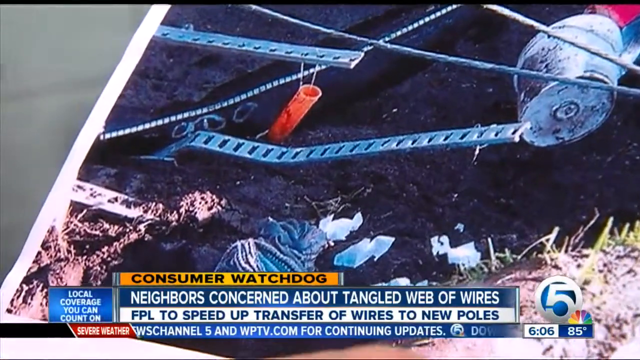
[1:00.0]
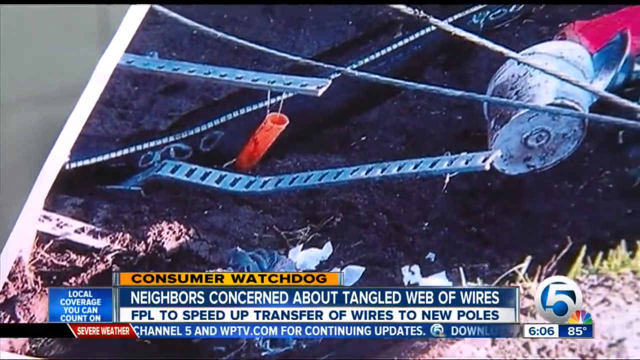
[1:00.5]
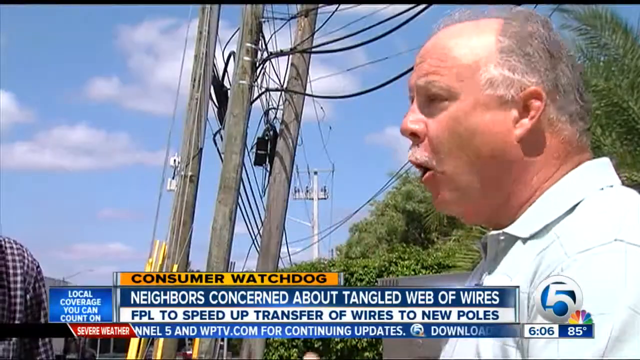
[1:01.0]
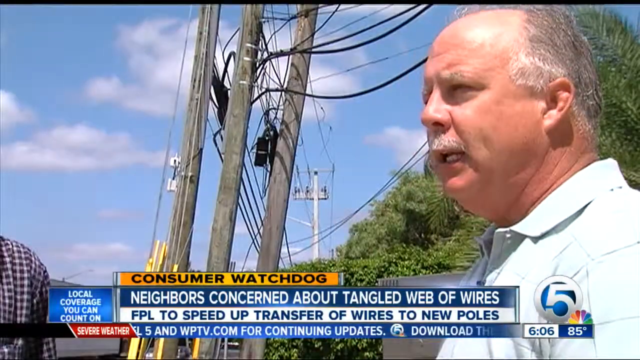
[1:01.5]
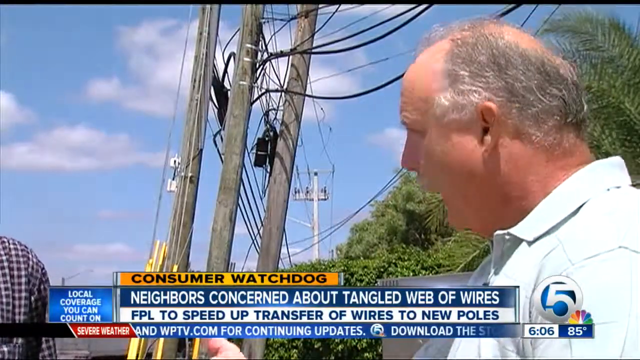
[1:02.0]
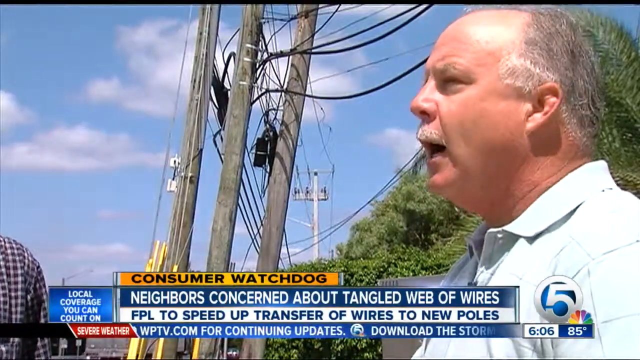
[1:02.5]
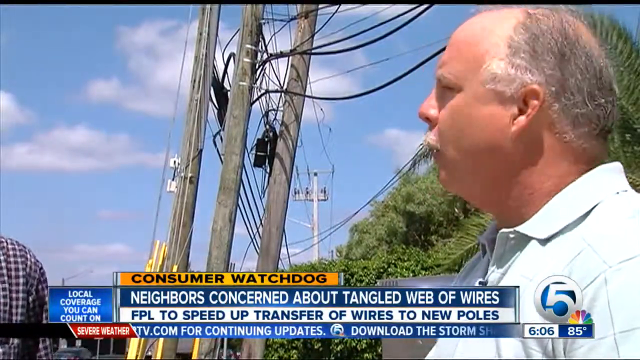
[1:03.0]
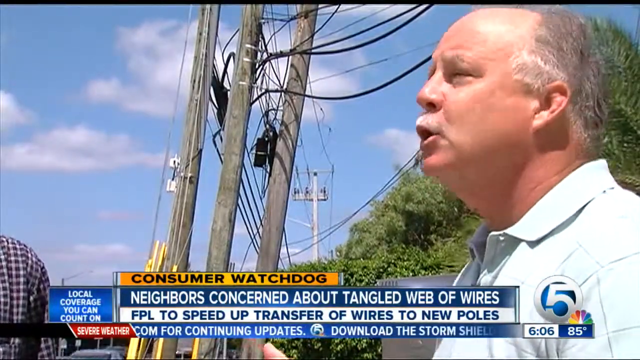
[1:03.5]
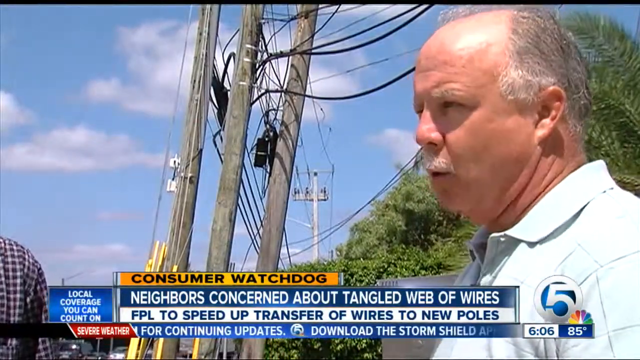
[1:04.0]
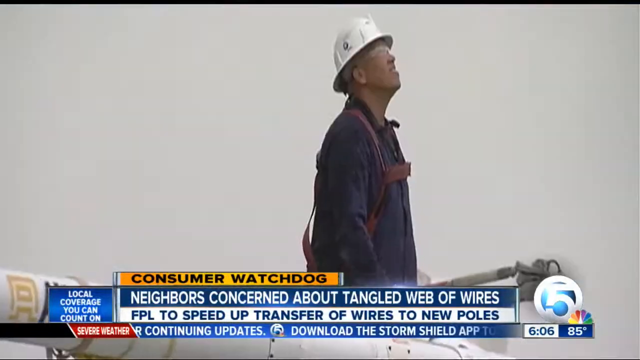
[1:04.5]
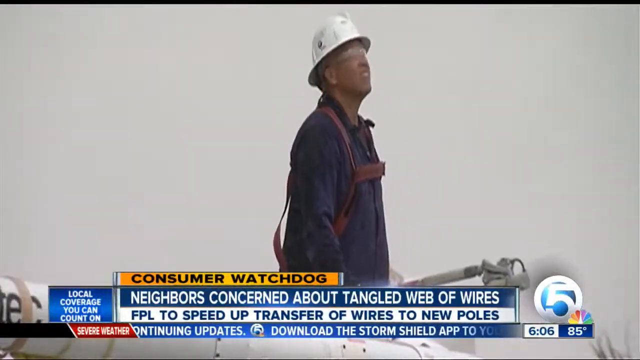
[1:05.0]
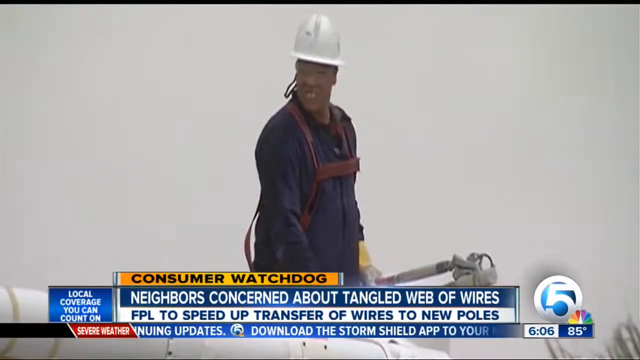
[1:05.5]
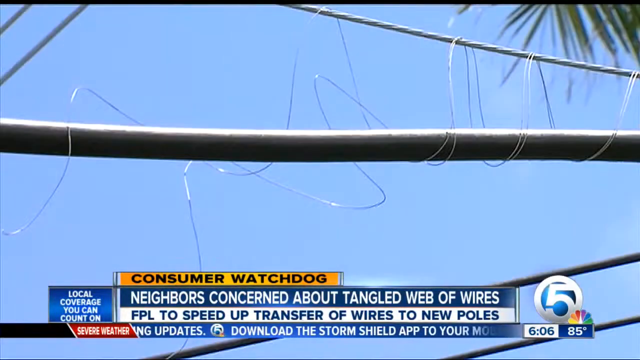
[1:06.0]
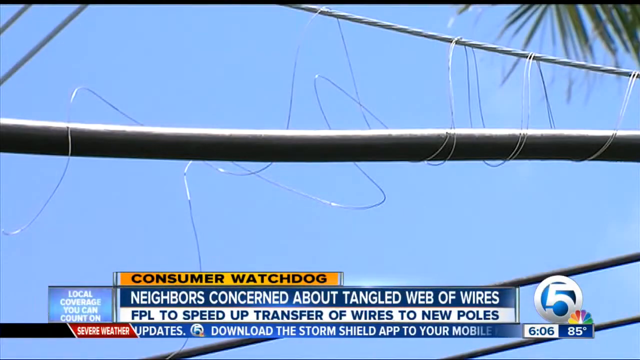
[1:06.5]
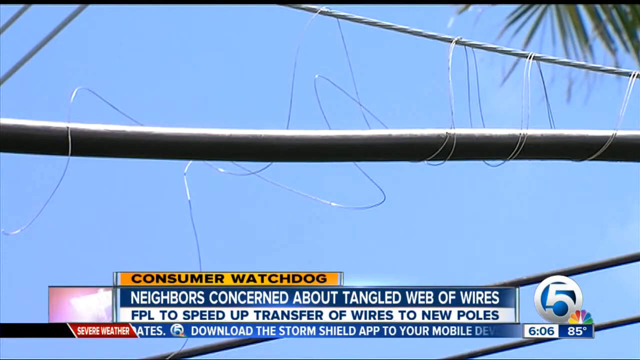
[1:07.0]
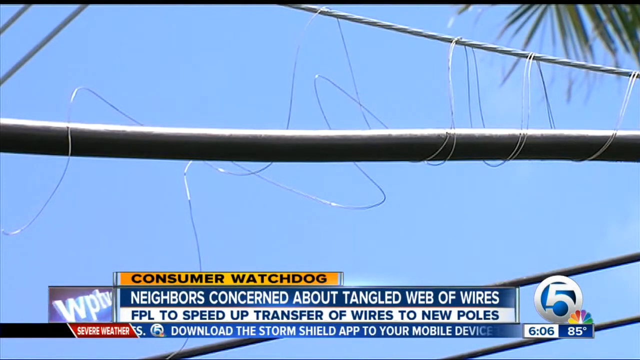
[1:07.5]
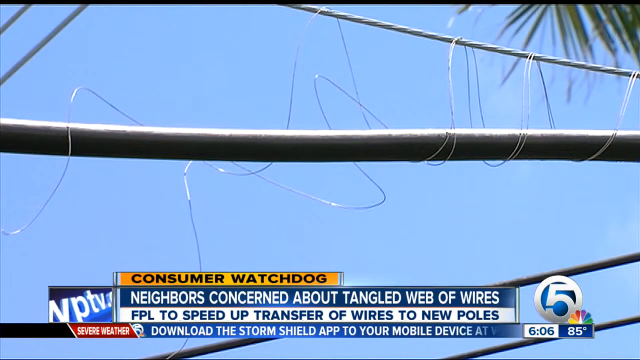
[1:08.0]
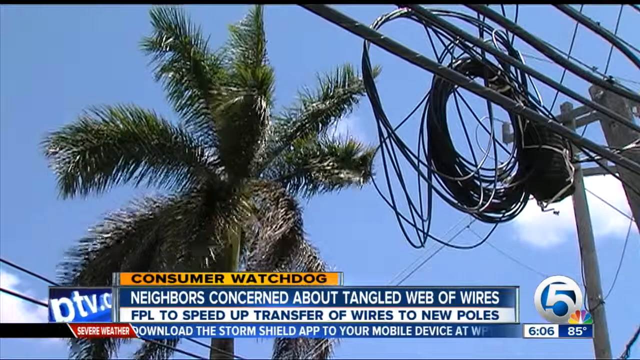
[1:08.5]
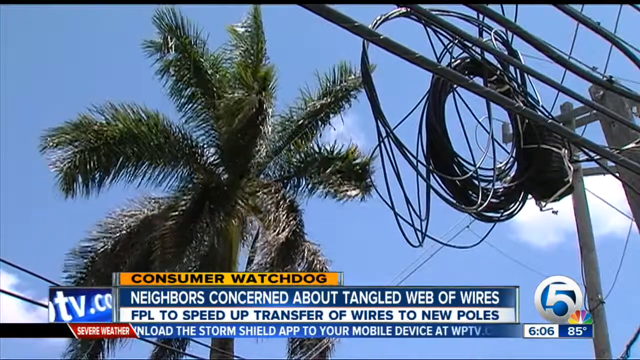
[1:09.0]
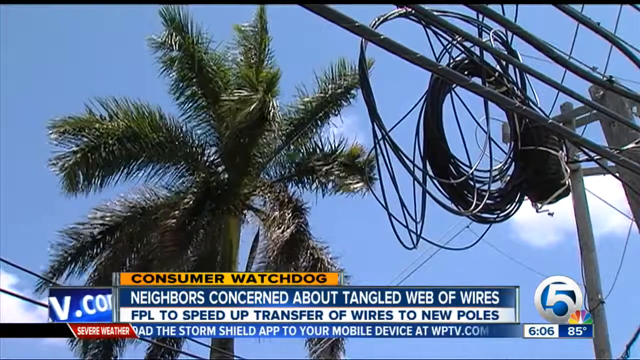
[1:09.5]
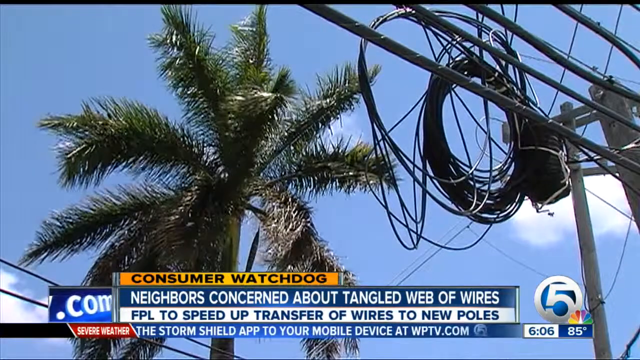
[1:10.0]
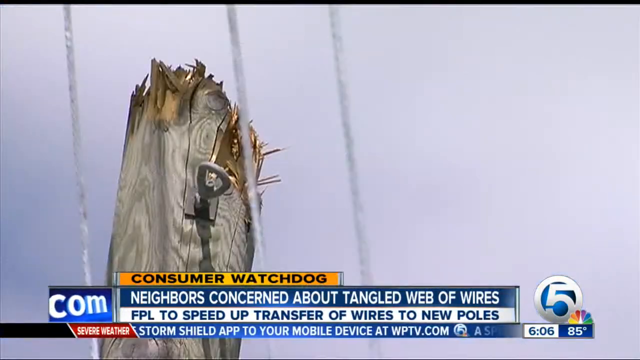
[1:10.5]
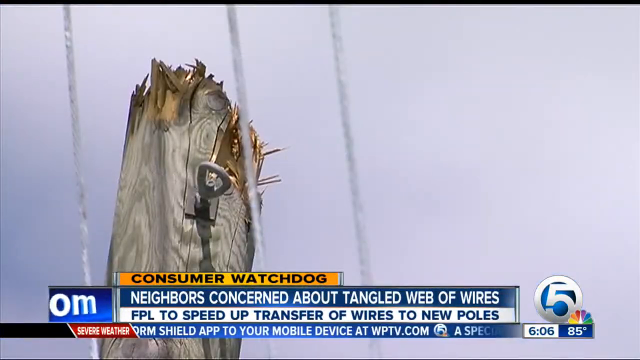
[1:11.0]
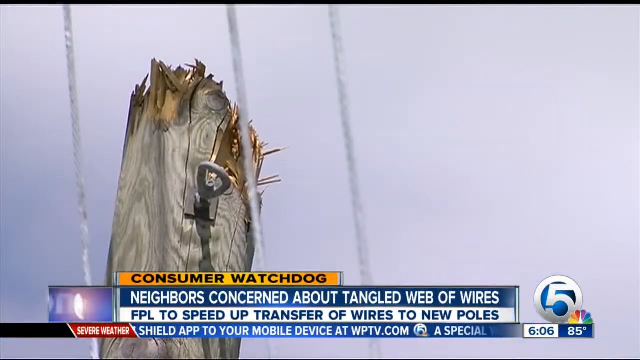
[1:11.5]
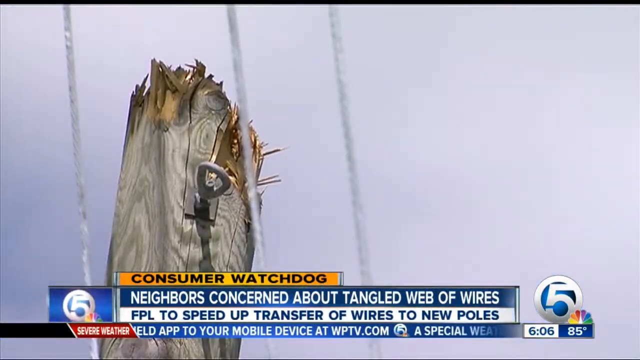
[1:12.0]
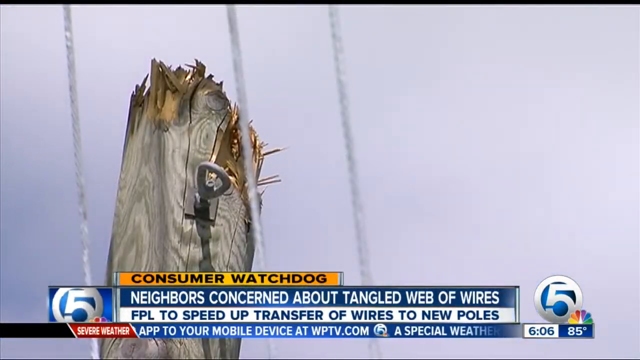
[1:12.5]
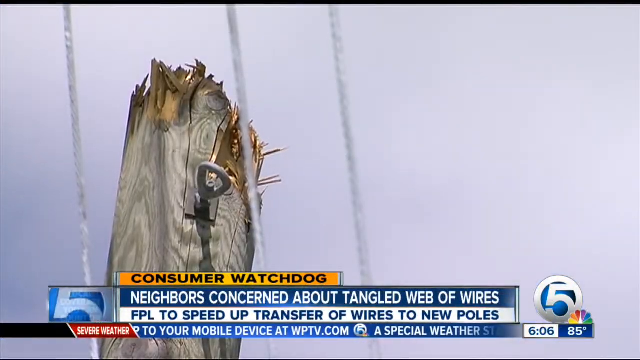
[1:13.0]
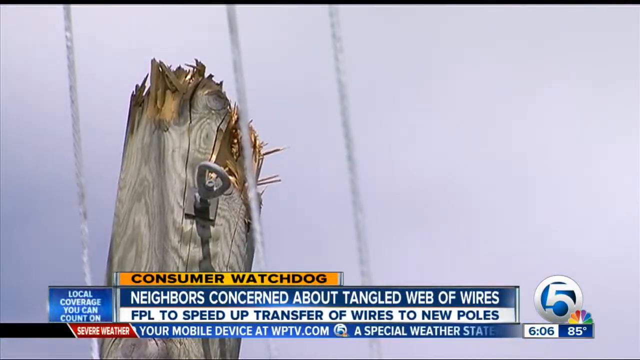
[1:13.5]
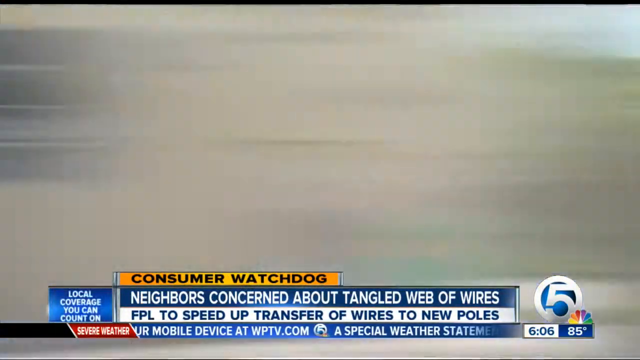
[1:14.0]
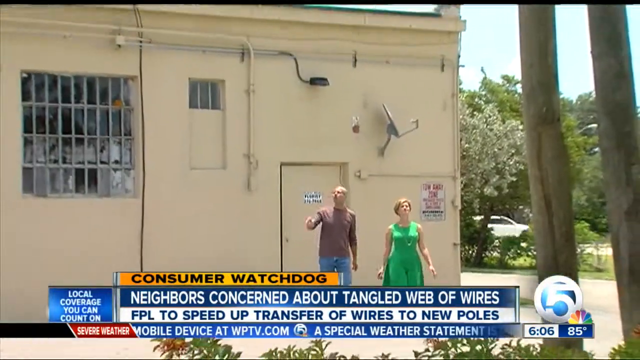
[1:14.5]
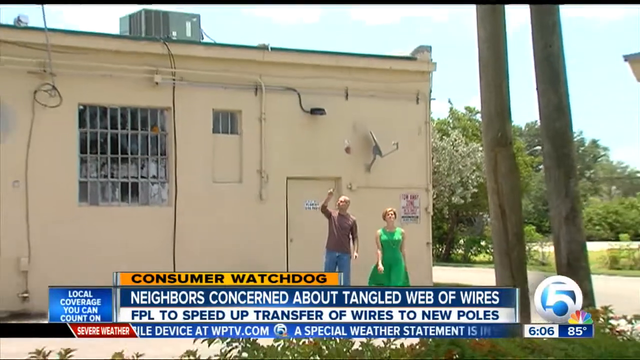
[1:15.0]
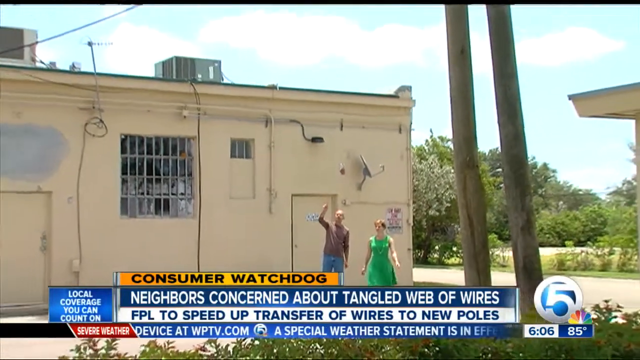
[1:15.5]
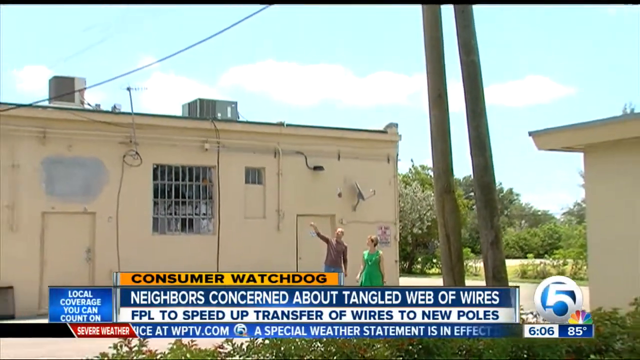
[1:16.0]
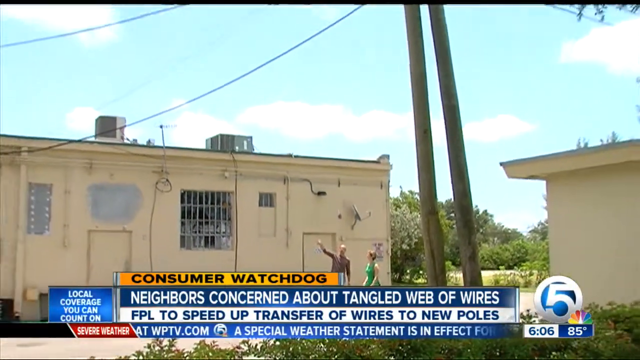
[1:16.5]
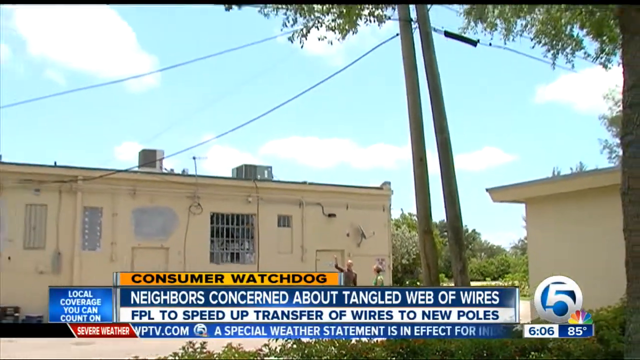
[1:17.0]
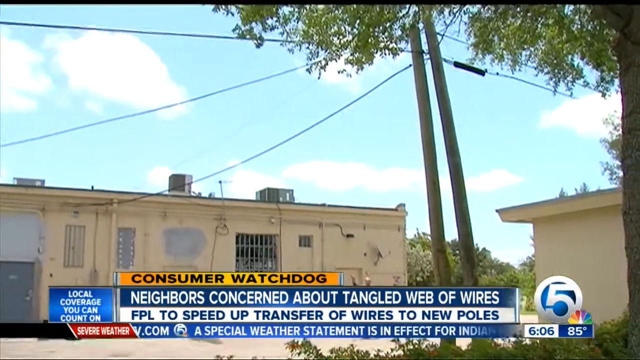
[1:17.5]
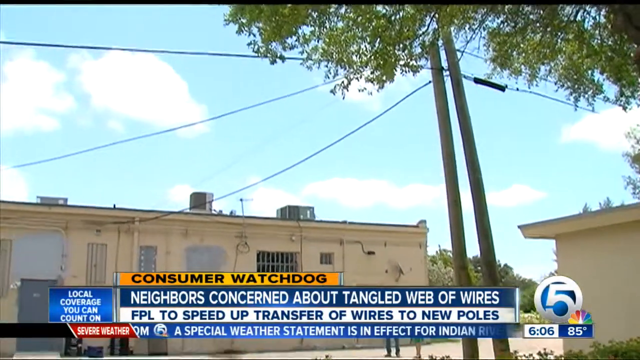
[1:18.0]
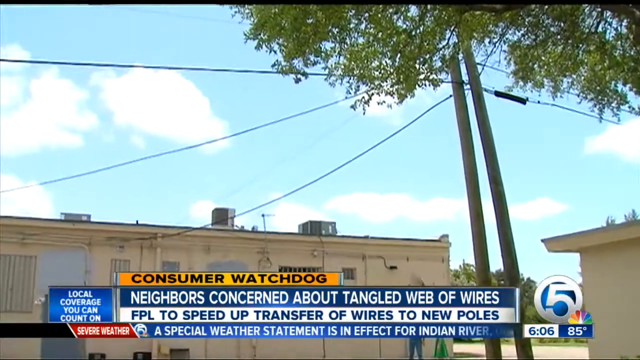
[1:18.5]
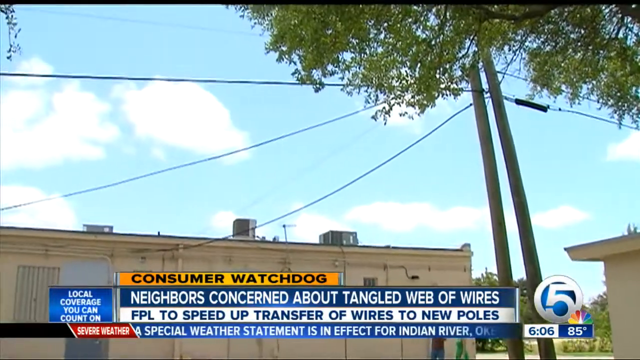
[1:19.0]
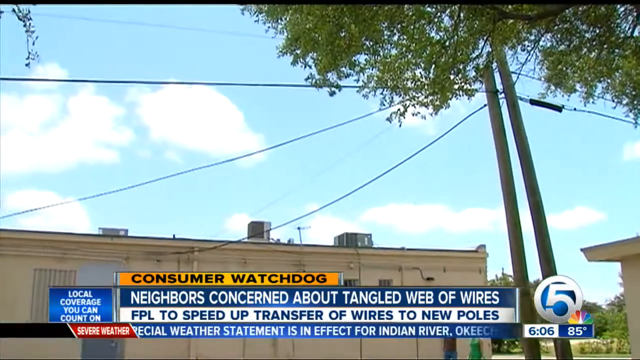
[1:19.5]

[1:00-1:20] The photograph of wires on the ground continues. The view returns to the man on the right, apparently talking to the reporter. He is very adamant, moving his head up and down and side to side as he speaks. For a moment, someone possibly from the telephone company appears, wearing a white helmet. A close-up of wires follows: one large black wire runs parallel across the screen, with a whole bunch of little tiny wires wrapped around it in this photograph. Looking up from the ground, a palm tree is on the left and the wires are completely disorganized in a circular pattern, with some parallel to the ground in the upper right-hand corner. Another zoomed-in look shows the broken piece of wood, which almost looks like a snapped telephone pole, with a little metal pin coming out of its center. Then the reporter and another man, different from the one seen before, walk toward the camera. The camera zooms out as he points up at the wires and telephone poles, and it continues to zoom out and pans slightly toward the left.